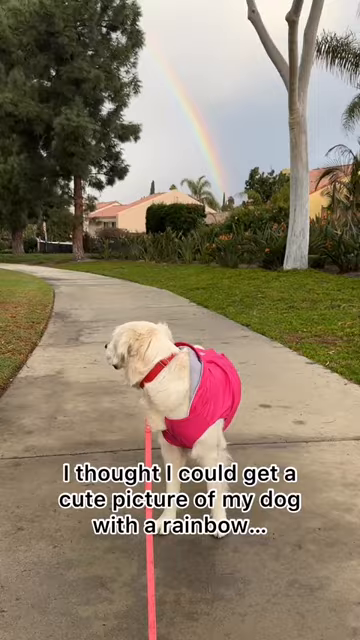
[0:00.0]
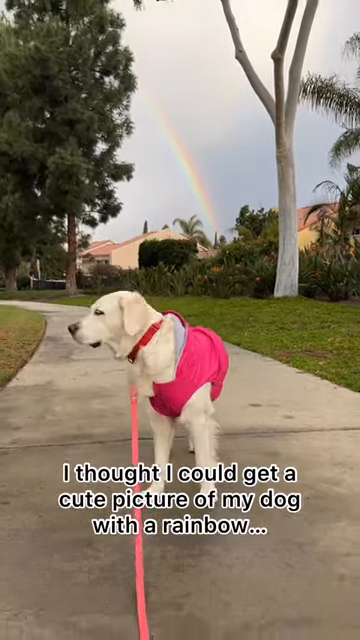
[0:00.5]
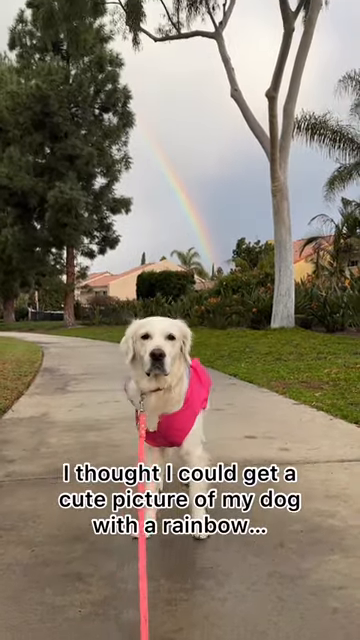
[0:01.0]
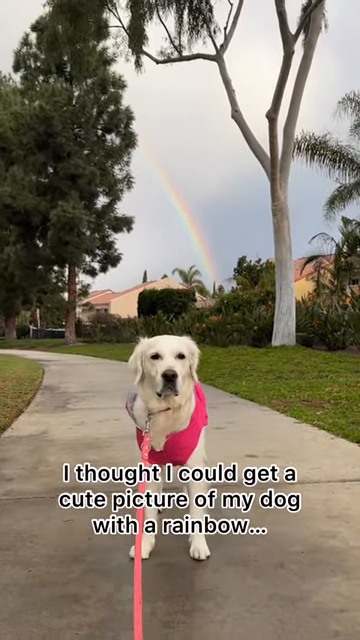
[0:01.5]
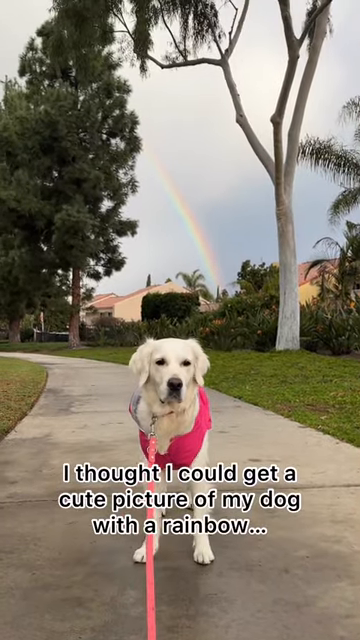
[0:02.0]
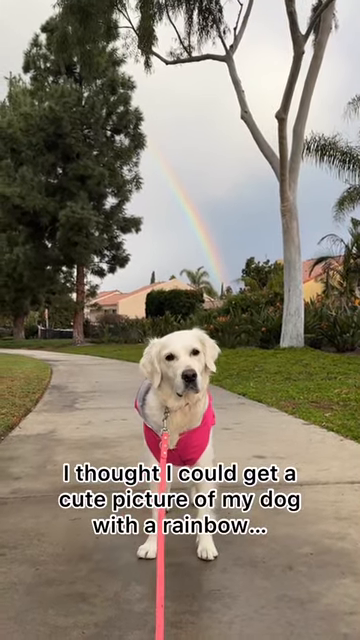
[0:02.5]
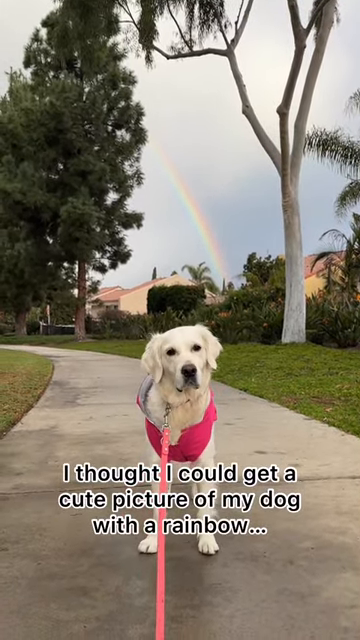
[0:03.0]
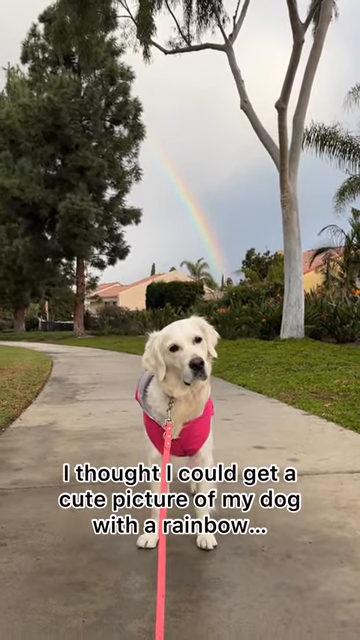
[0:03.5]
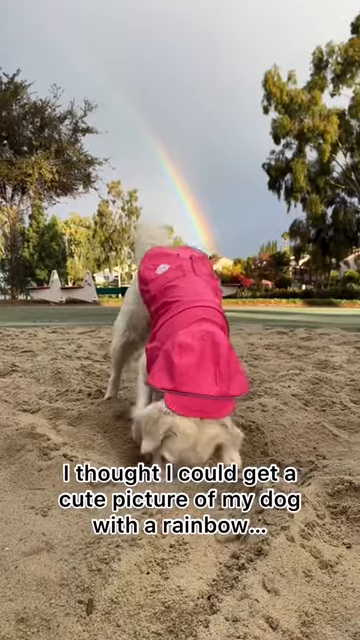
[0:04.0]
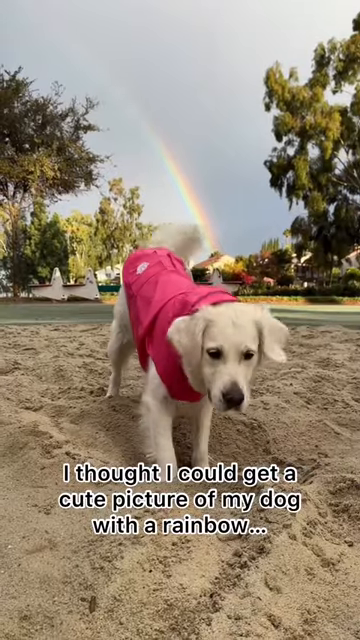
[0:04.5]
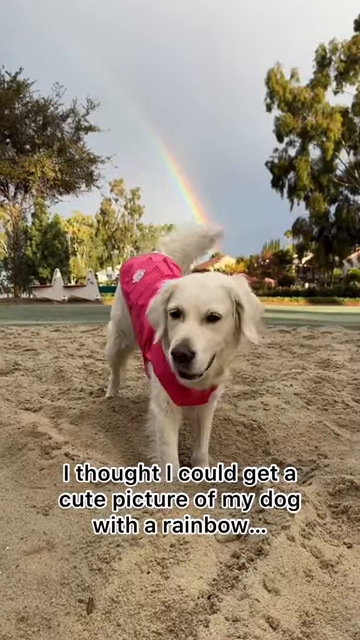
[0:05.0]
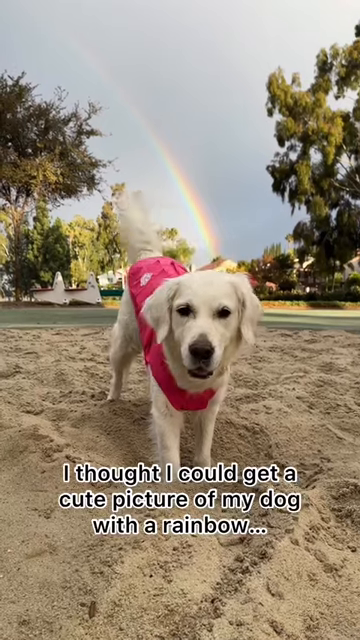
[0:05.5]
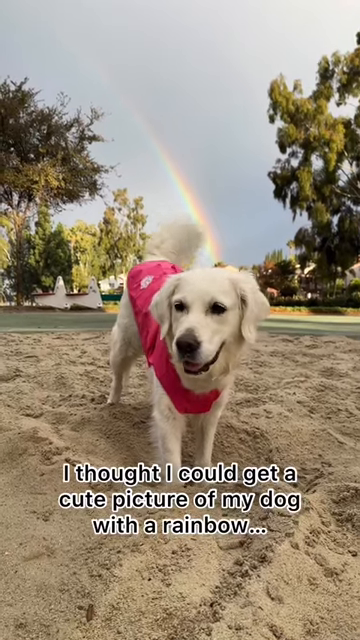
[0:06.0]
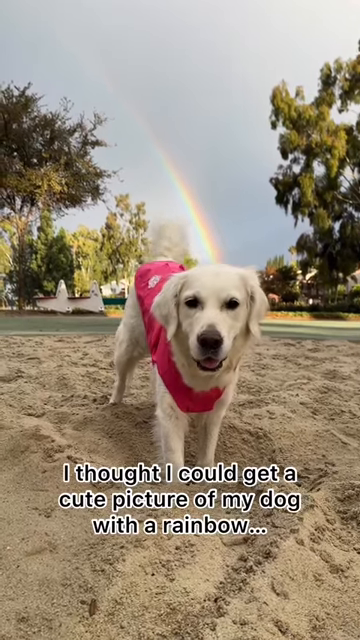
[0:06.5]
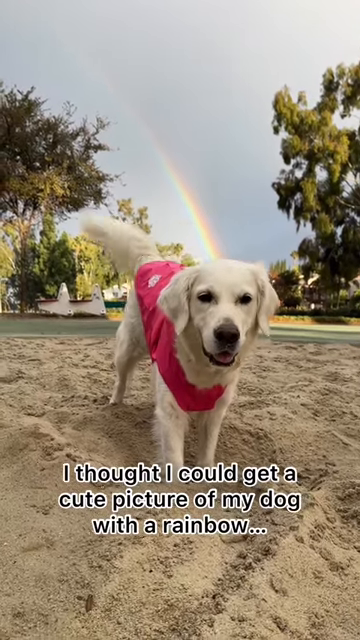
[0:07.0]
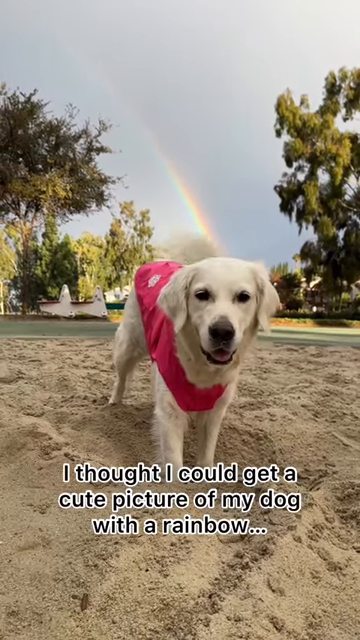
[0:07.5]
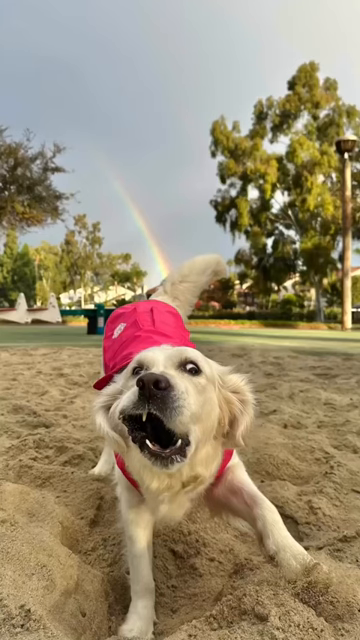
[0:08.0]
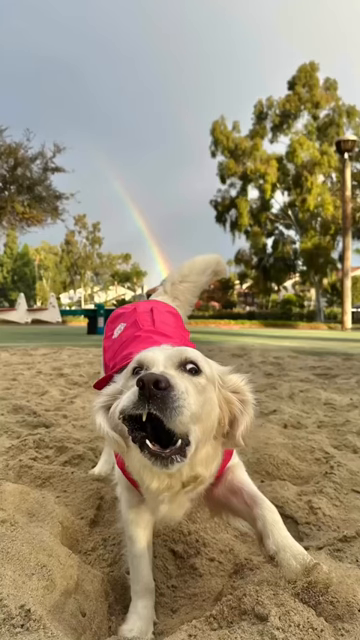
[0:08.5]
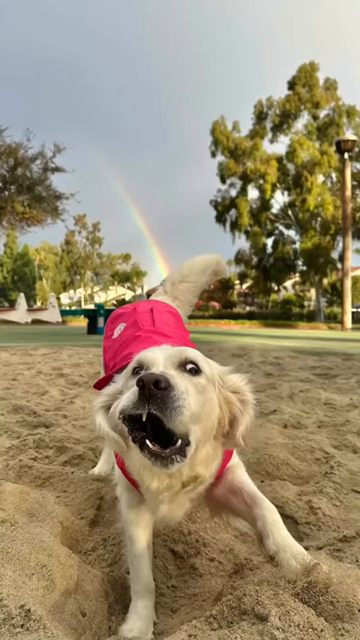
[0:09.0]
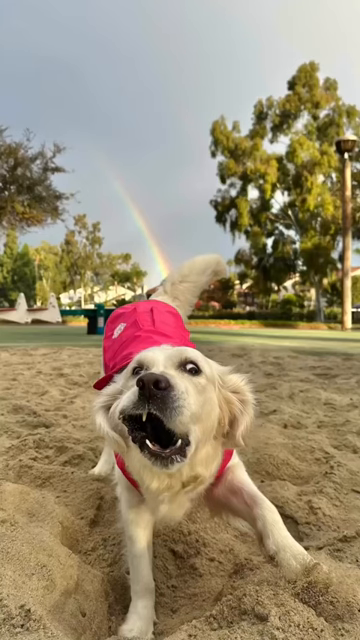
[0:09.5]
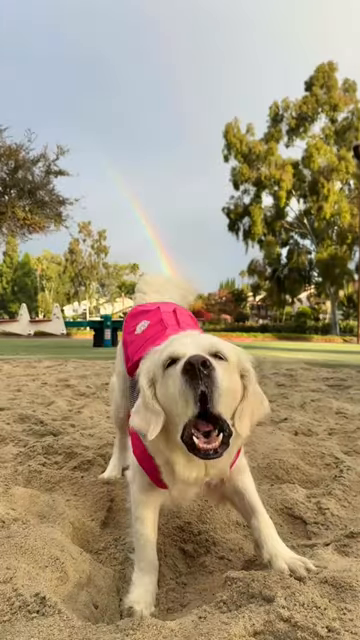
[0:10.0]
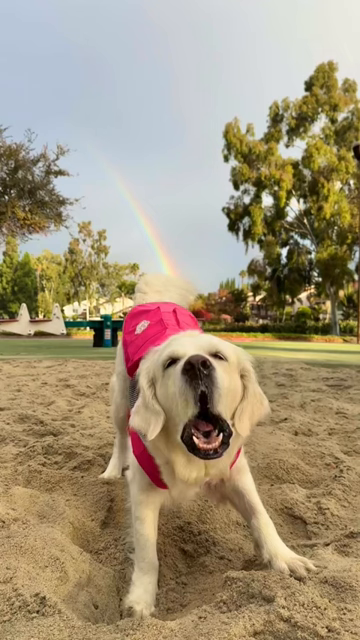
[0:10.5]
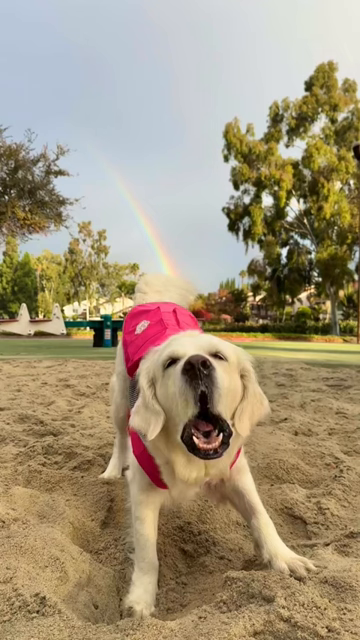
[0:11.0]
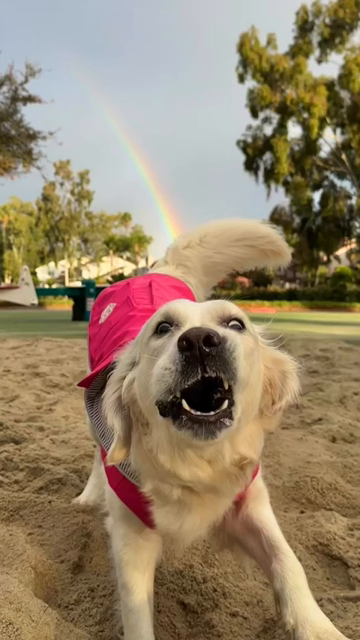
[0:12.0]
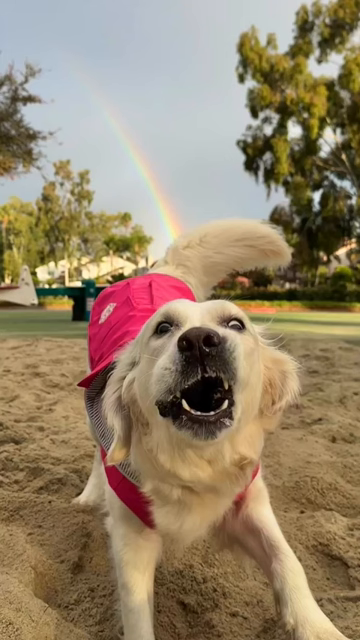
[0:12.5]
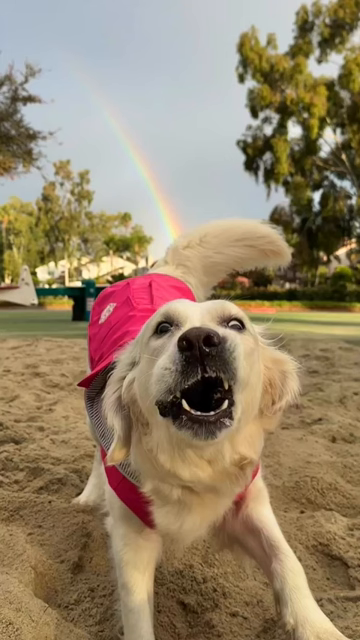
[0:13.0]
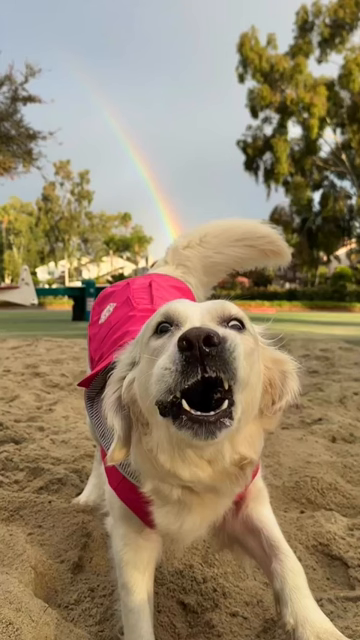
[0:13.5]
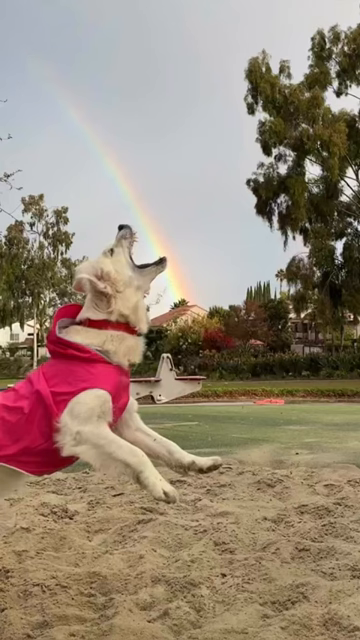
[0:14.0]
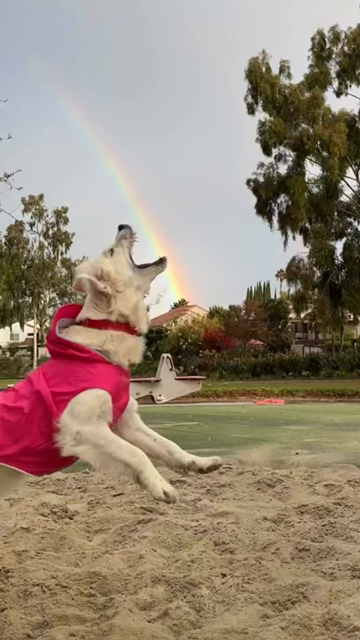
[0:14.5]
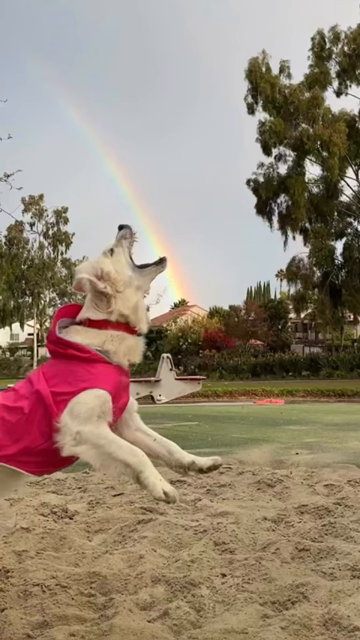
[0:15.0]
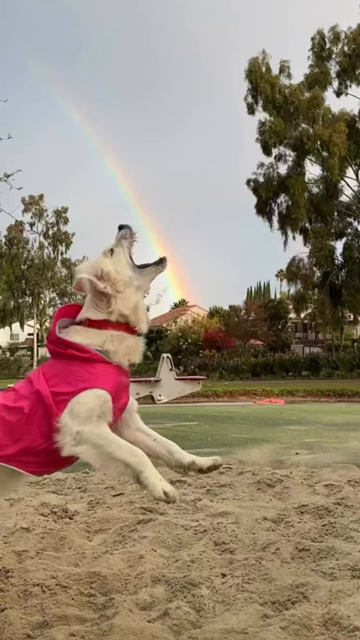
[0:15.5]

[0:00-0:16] A person takes a dog for a walk, trying to get a cute picture of it. The dog is white and looks like a golden lab, and it wears a pink harness, so it is apparently a girl. Closed captions read "I thought I could get a cute picture of my dog with a rainbow." The day is cloudy, and a perfect rainbow is behind them in the background. They are in a park, in a sand area. Three pictures the person took are then shown, and each is a fail: in one, the dog's mouth is all open and the dog looks distorted; in another, the dog looks crazy, vicious and violent; and in the last, the dog looks like it is jumping up trying to bite the rainbow.